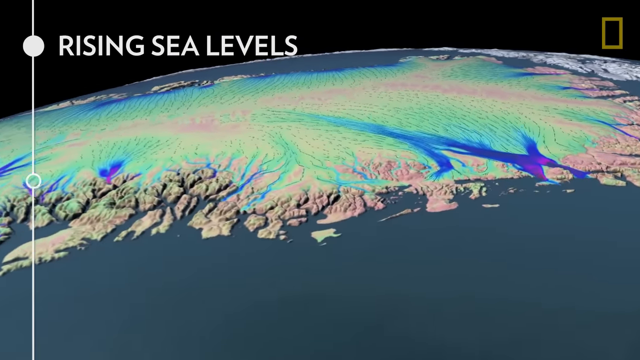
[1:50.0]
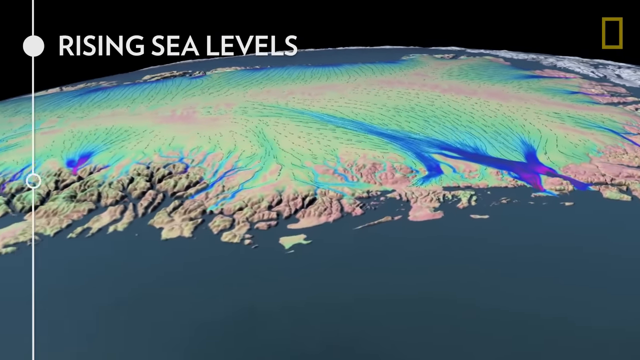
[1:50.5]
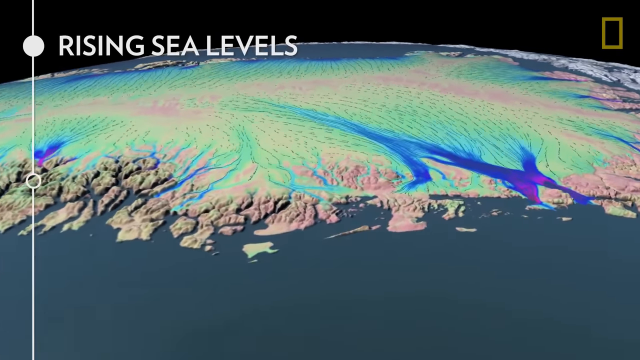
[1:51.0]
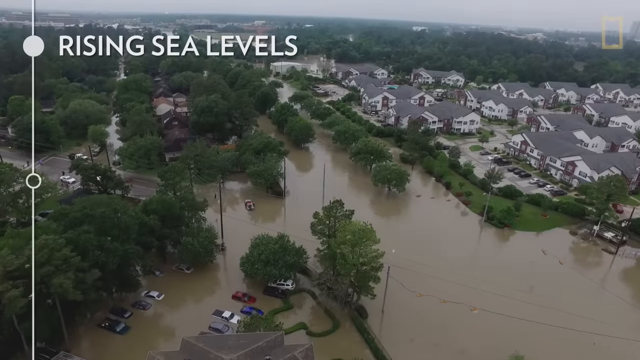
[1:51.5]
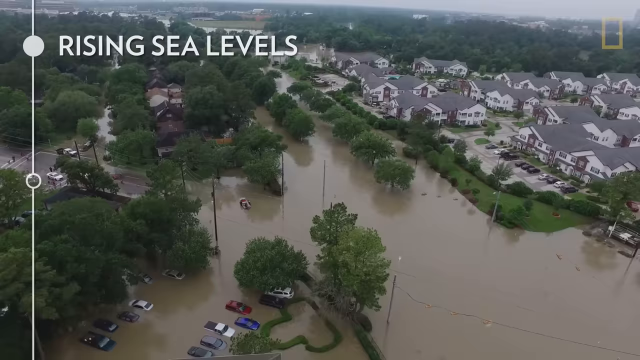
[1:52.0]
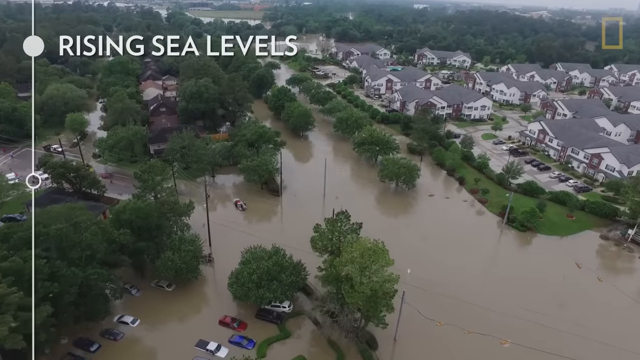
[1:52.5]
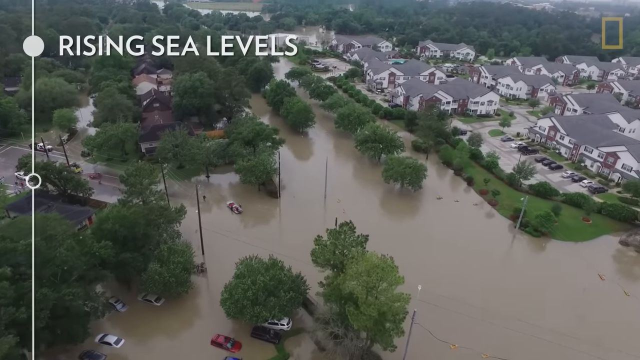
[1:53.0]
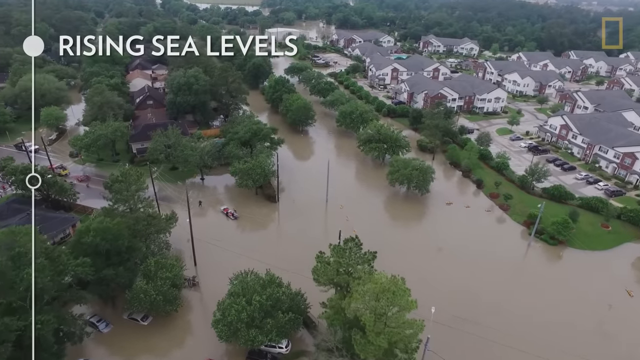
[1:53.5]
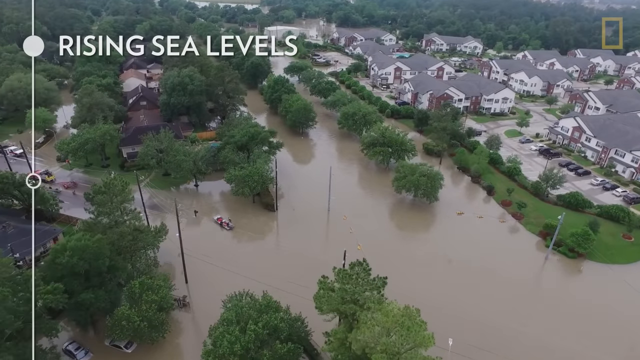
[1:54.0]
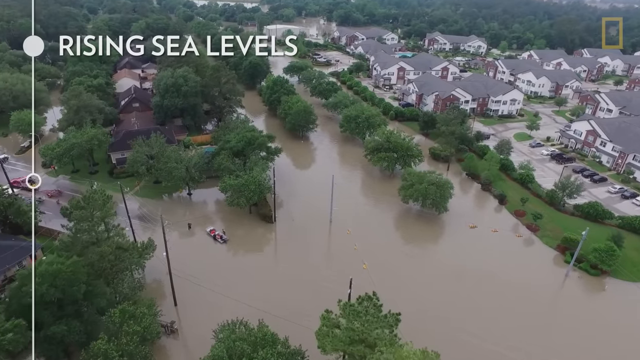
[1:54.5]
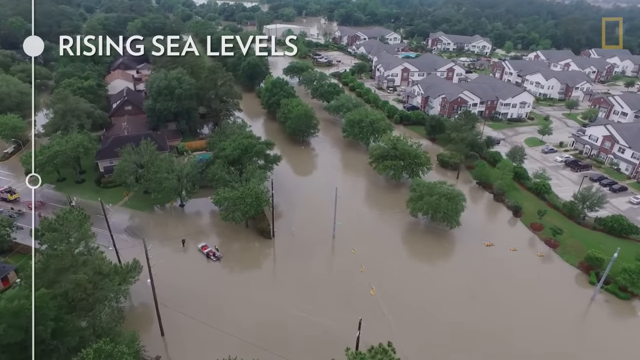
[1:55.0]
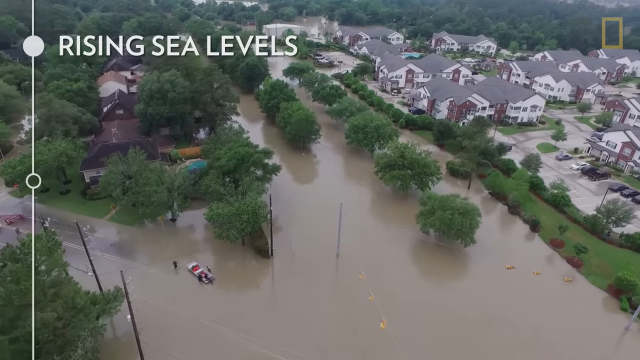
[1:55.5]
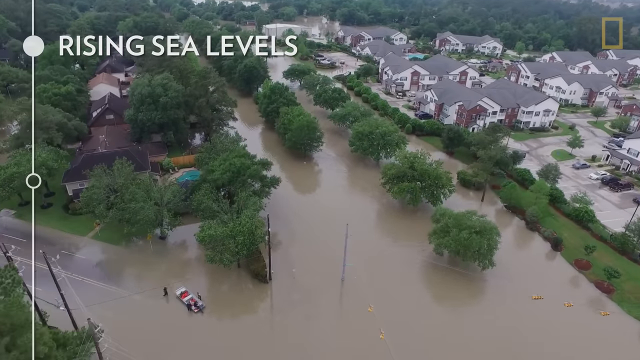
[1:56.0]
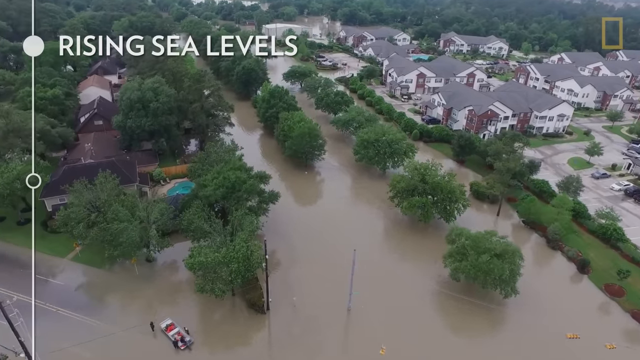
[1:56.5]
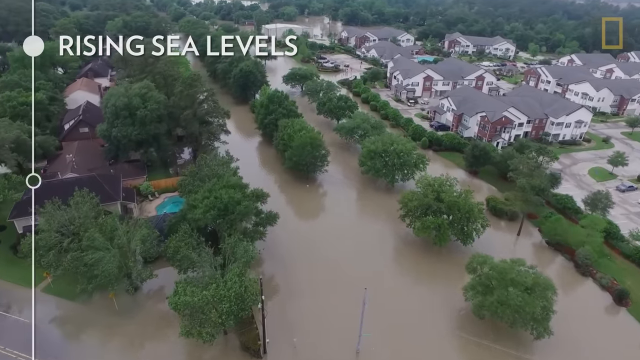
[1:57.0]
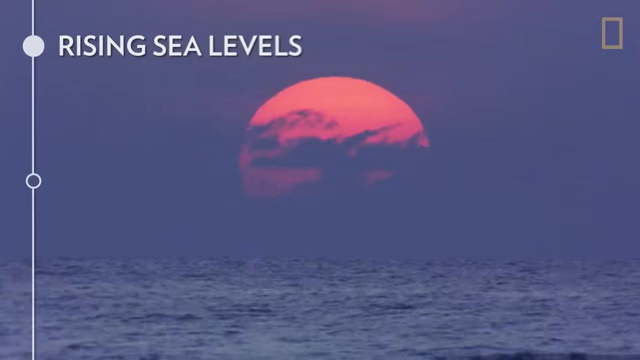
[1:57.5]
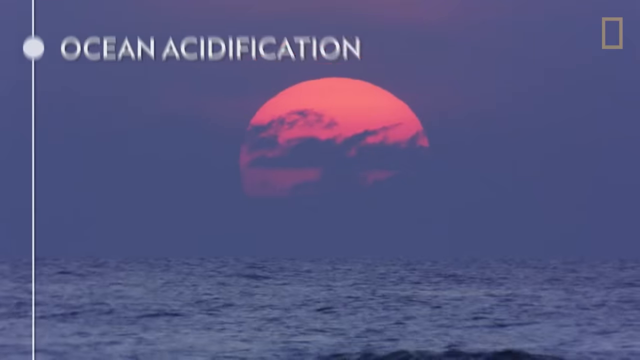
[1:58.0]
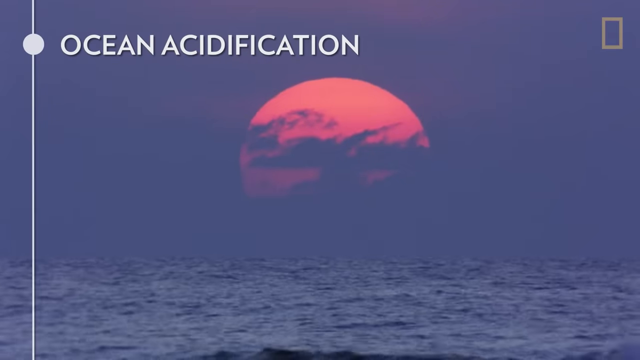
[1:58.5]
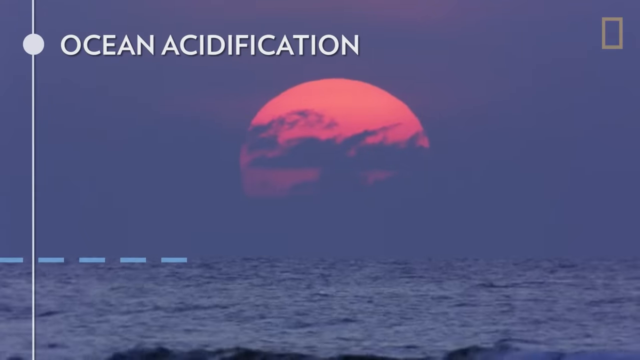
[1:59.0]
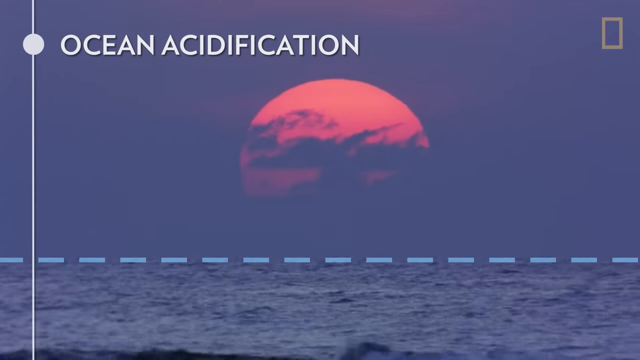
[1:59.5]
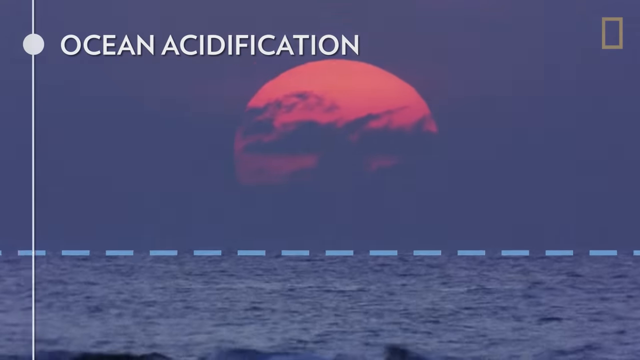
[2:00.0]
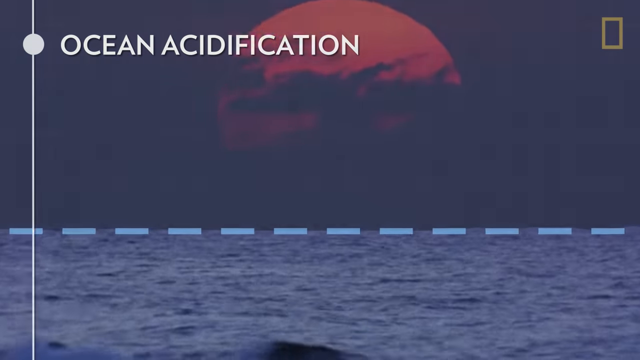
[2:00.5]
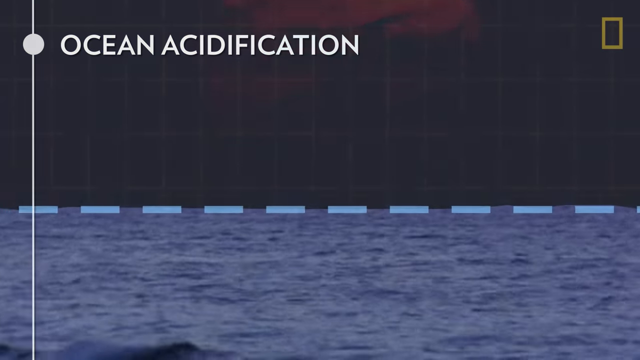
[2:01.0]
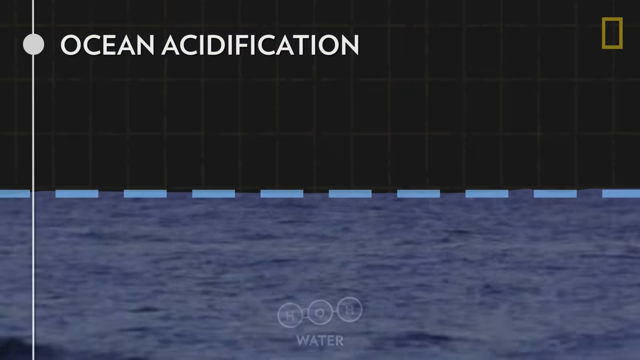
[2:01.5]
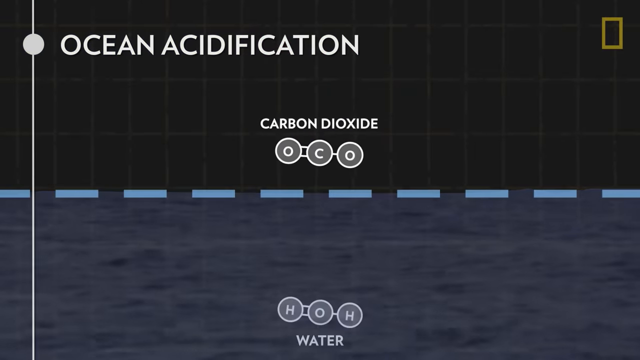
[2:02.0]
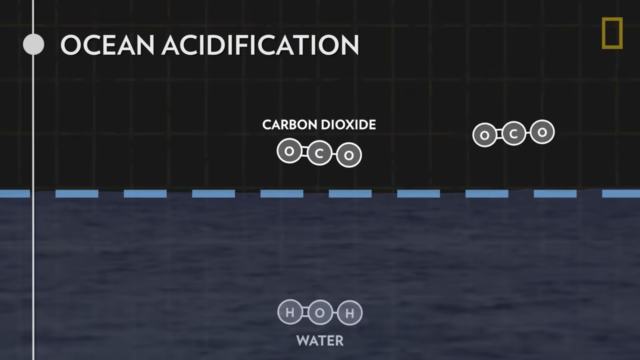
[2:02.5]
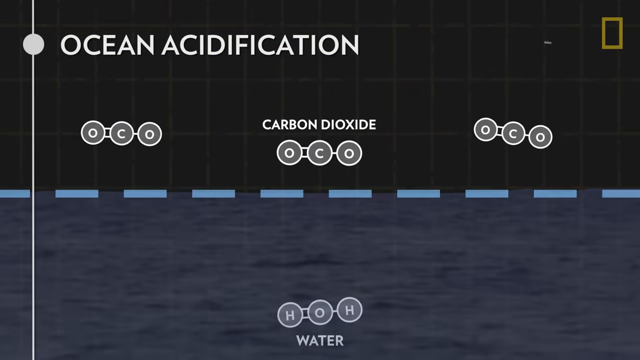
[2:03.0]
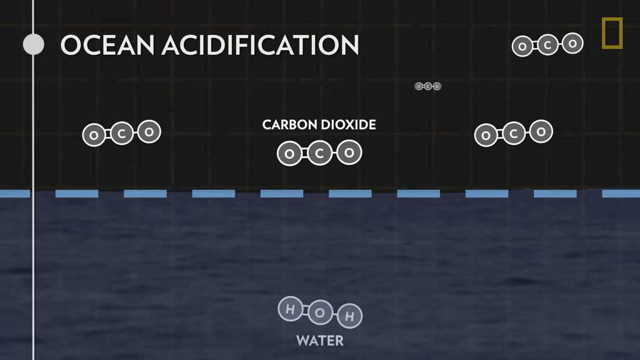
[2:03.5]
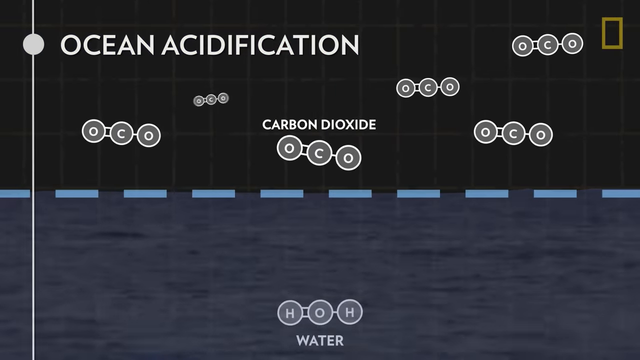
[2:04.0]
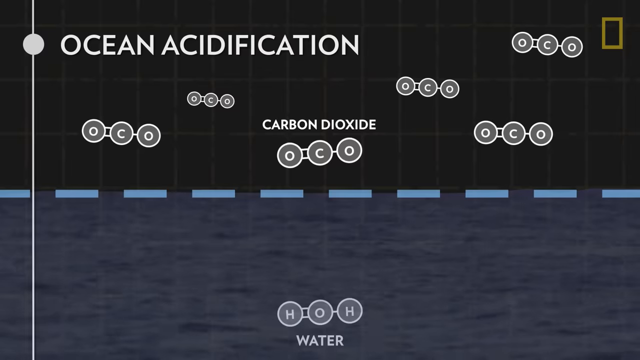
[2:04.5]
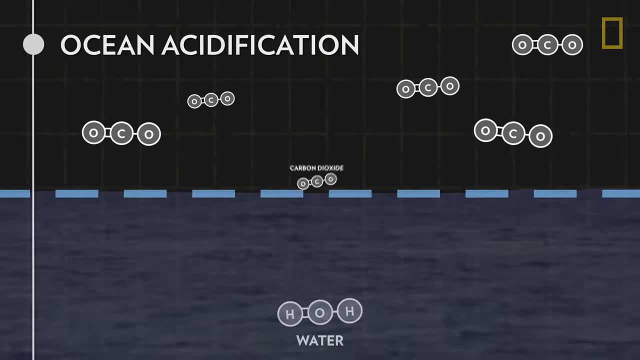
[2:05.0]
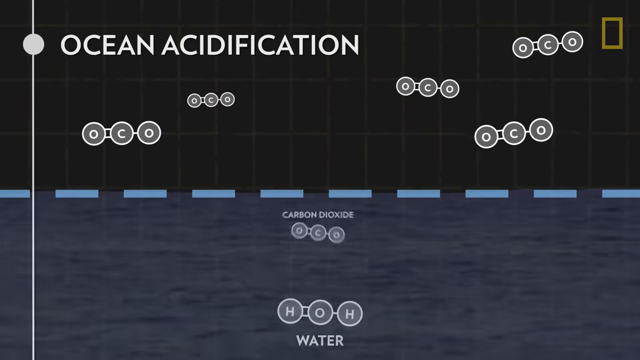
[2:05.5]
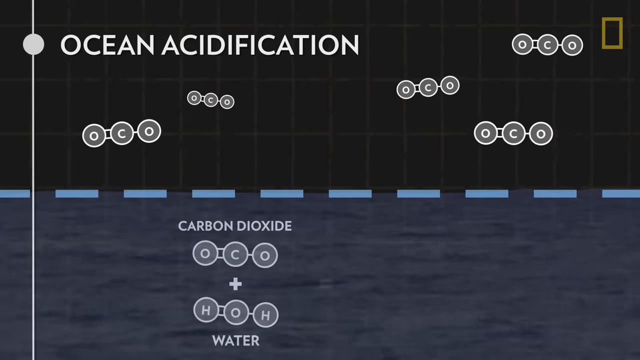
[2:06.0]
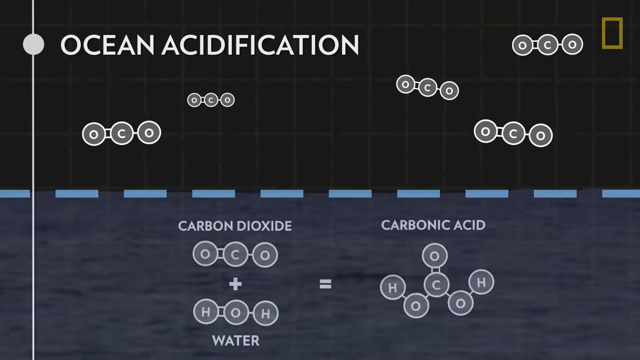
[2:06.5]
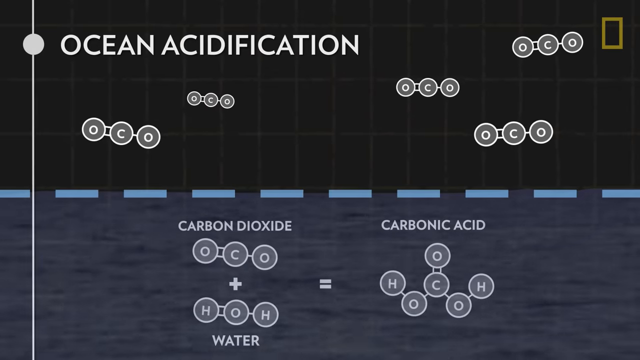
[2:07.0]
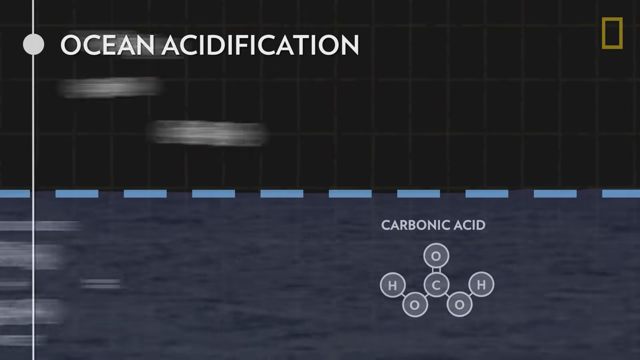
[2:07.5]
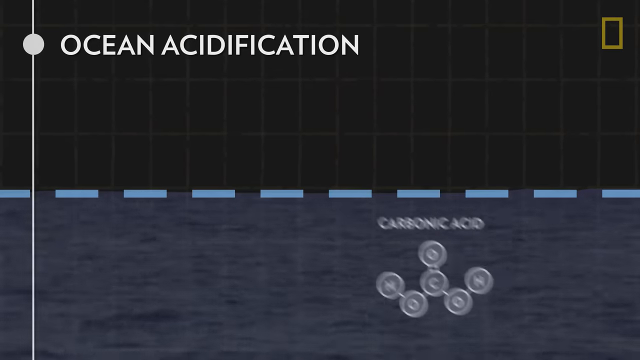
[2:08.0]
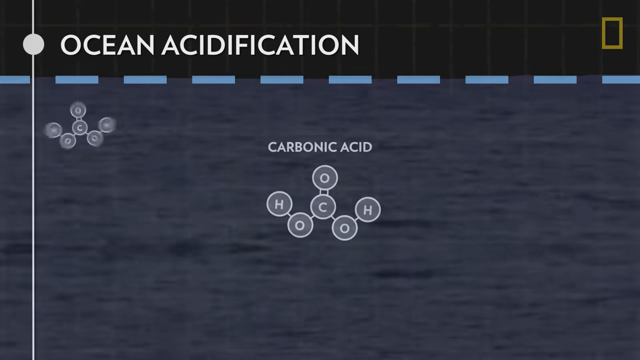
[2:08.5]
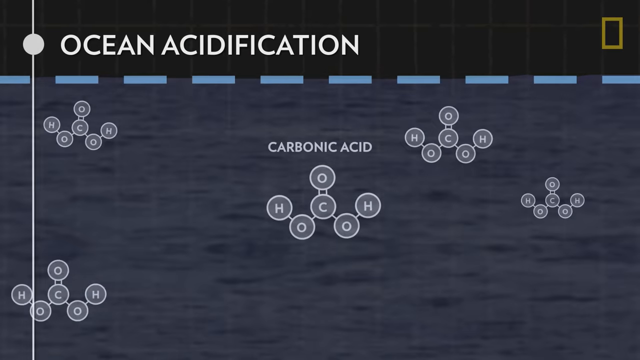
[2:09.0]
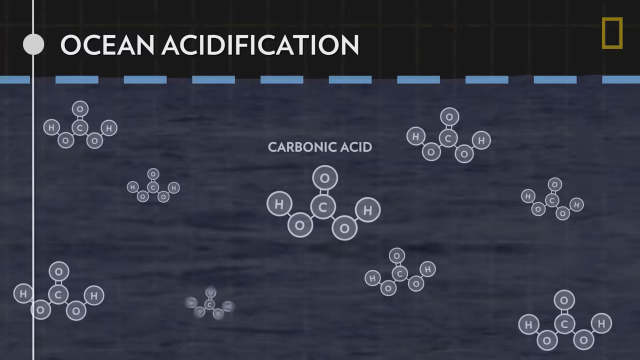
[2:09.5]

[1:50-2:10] White capital letters in the upper left read "rising sea levels." The view looks down, perhaps from a low-flying helicopter or a drone, on what appears to be a flooded area. Across about two-thirds of the area, on the left-hand side, there is just risen water with trees sticking out of it sporadically. In the upper right are flooded houses that have not gone completely under the water yet, and the entire area looks severely flooded. The video then moves to a blue background with what appears to be a sunrise or sunset in the middle; the sun is a kind of peachy orange. White capital letters in the upper left read "ocean acidification." The view zooms in on the area below the sun, which appears to be choppy water, and molecular chains load in: in the middle an O chained to a C chained to an O, with the words "carbon dioxide" above it, then another O-C-O on the left and a couple more on the right.